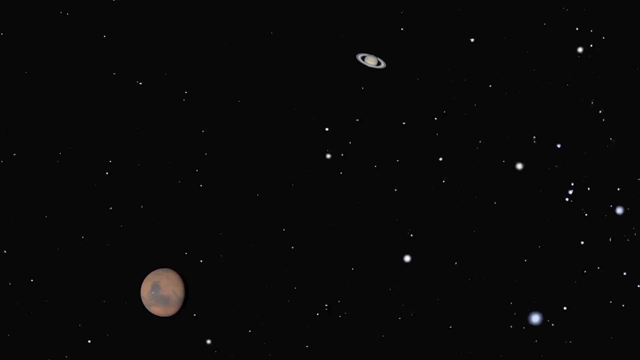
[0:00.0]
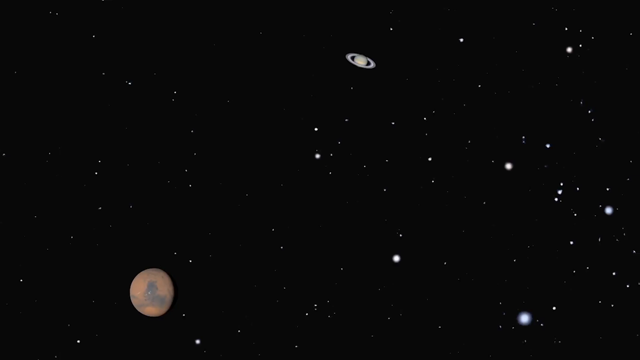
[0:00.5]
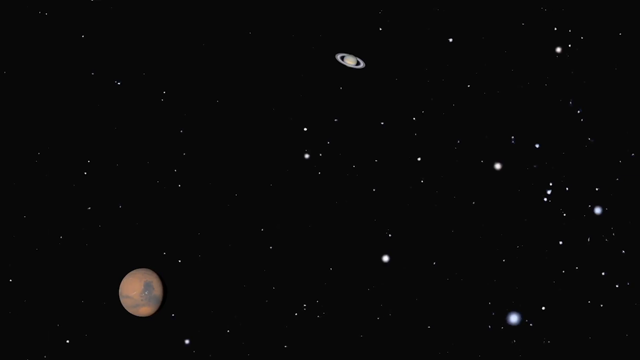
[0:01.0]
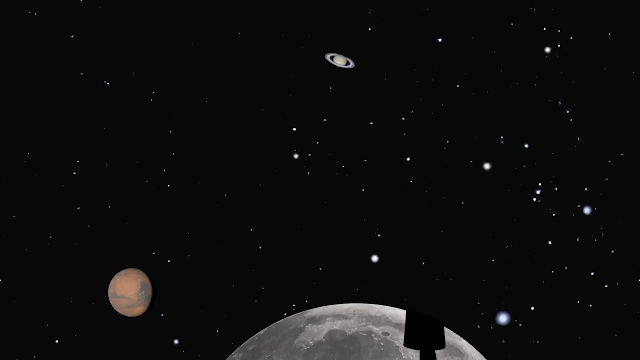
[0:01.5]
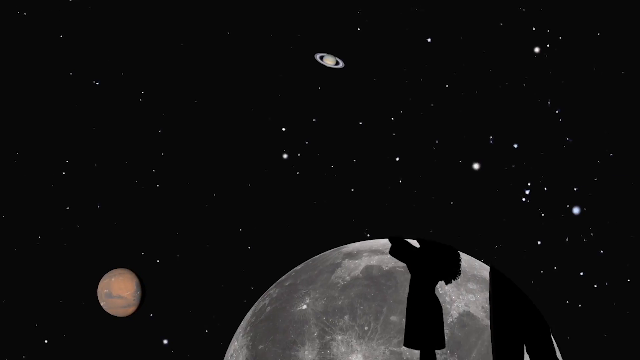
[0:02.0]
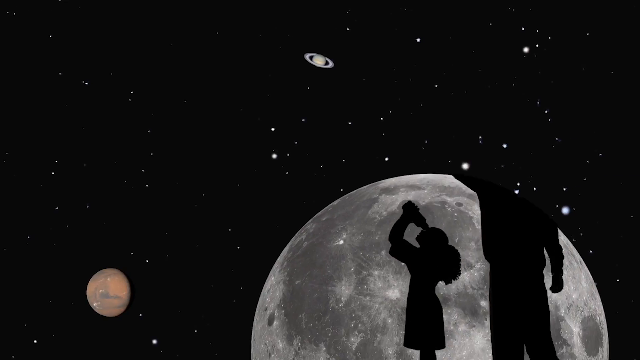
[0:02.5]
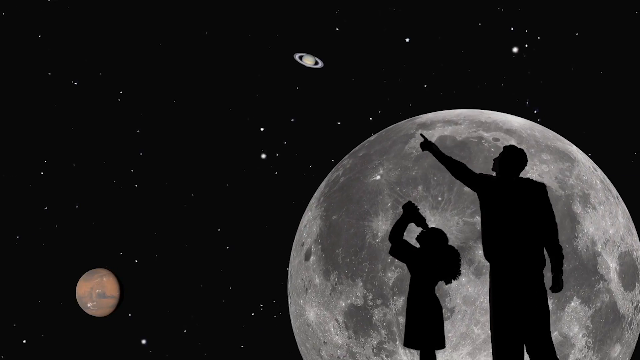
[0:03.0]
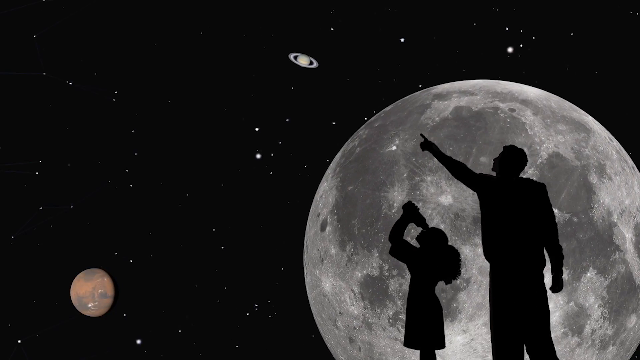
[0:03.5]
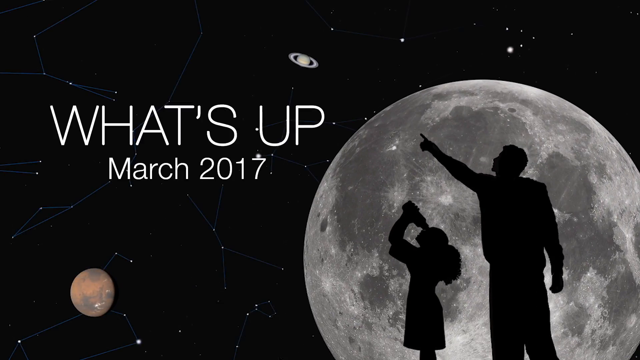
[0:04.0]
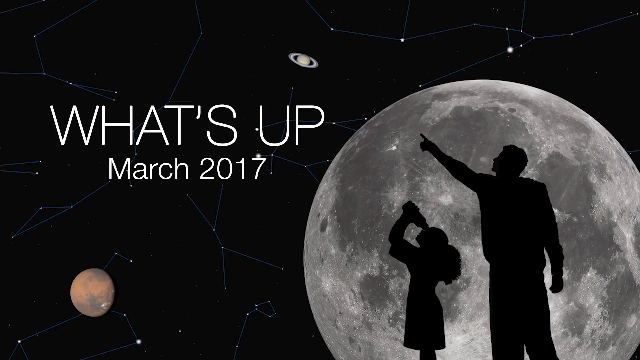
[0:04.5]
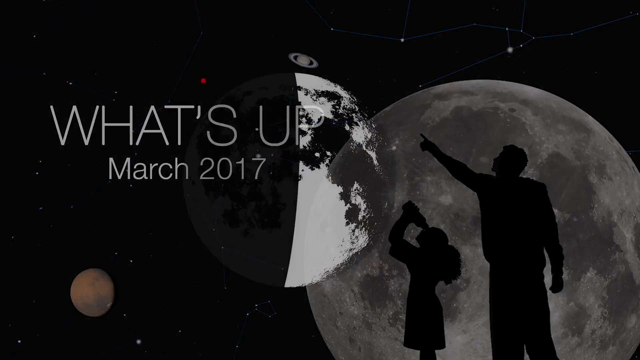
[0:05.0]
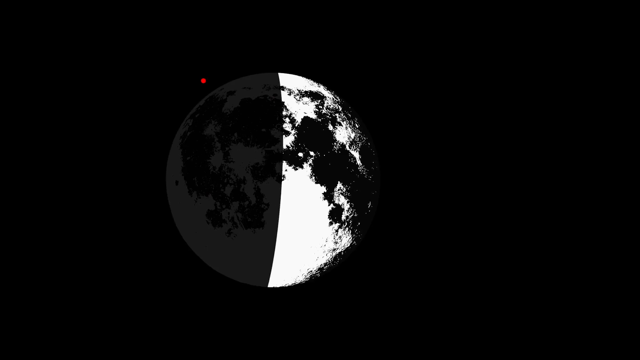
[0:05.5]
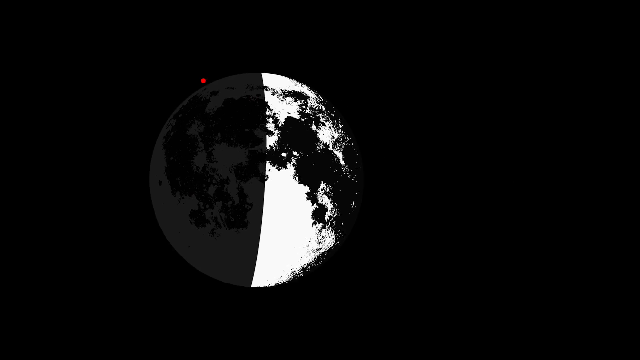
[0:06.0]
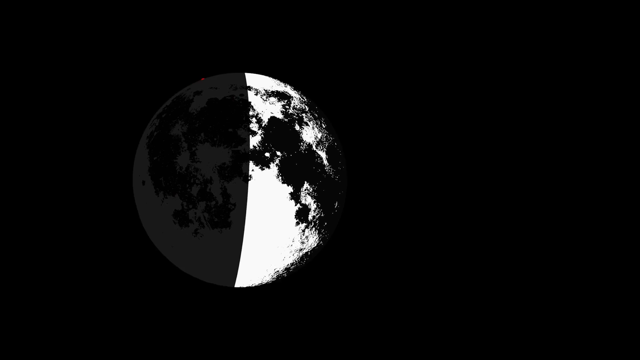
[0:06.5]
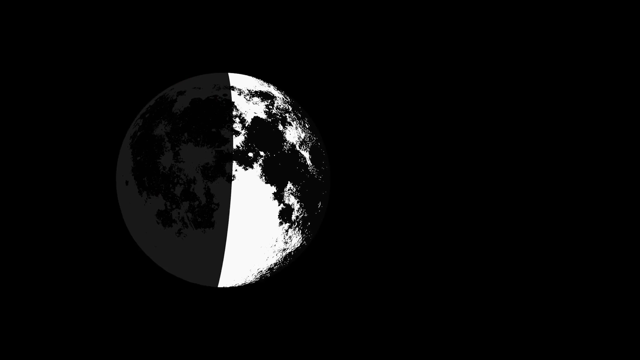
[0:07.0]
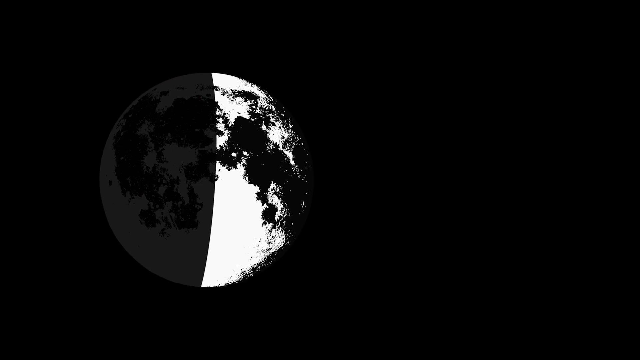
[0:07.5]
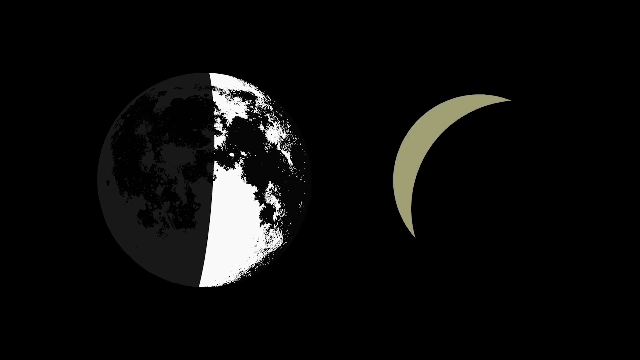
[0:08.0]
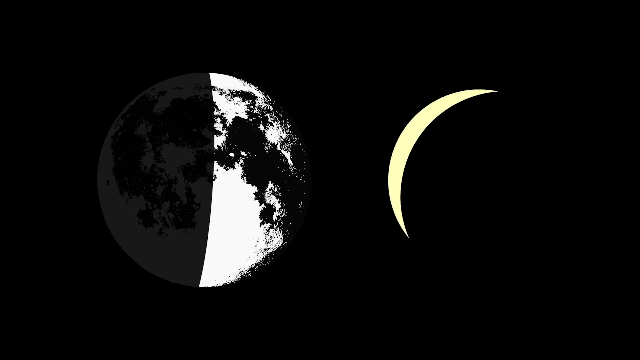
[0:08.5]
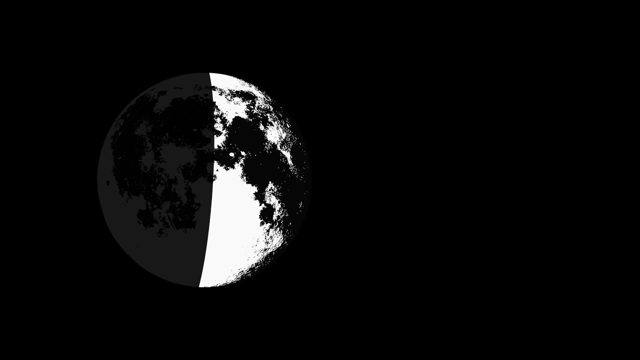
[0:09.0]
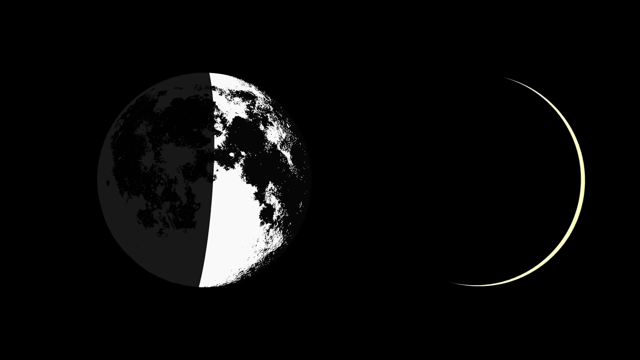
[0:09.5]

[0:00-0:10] Footage of space opens the video, showing different planets: apparently Mars at the bottom left and Saturn at the top right. Many white specks, stars of varying brightness and size, are scattered over the black background. Text appears on the left reading "what's up, March 2017". The moon then comes up at the bottom right, sort of popping up from the bottom left. Two people, almost like silhouettes, look up toward the top left of the sky.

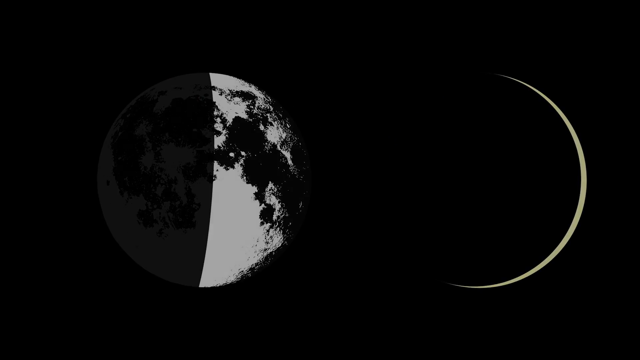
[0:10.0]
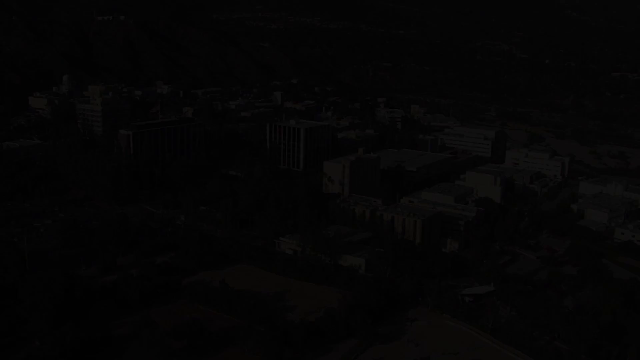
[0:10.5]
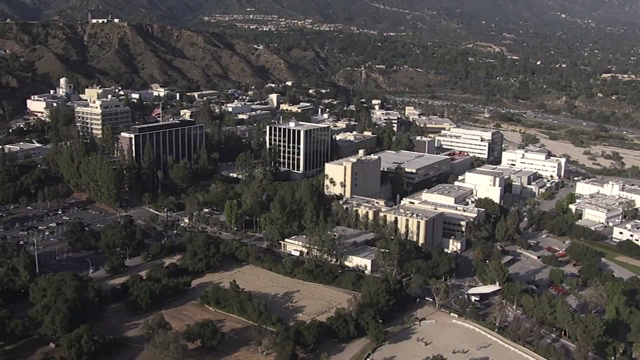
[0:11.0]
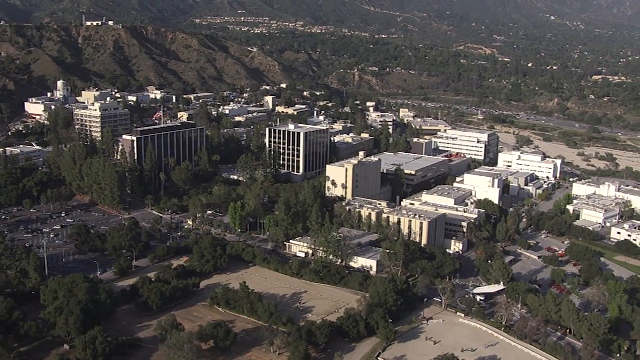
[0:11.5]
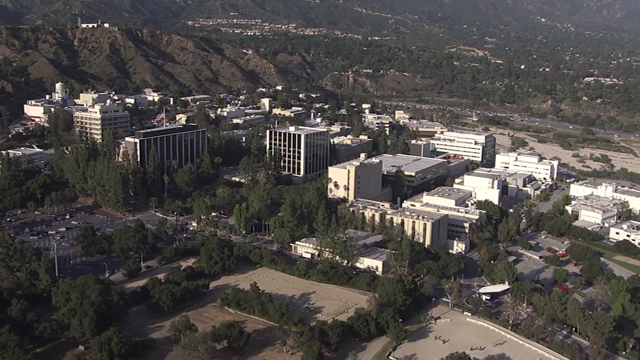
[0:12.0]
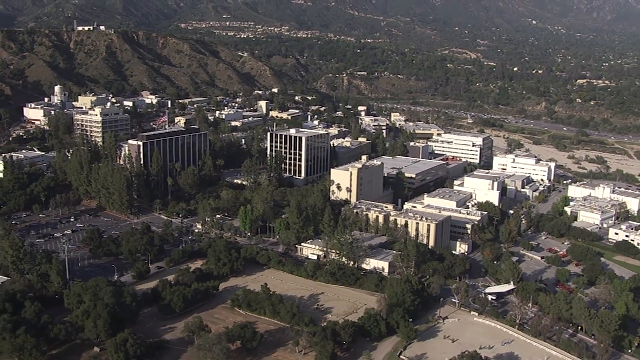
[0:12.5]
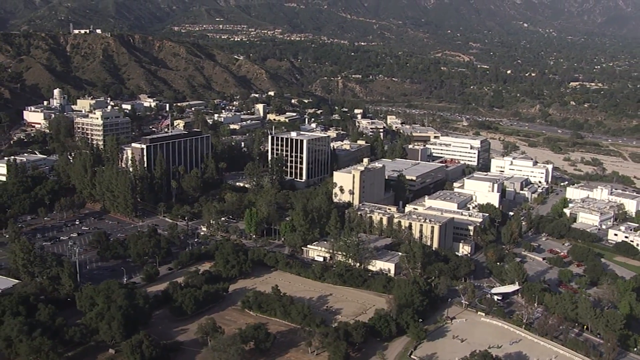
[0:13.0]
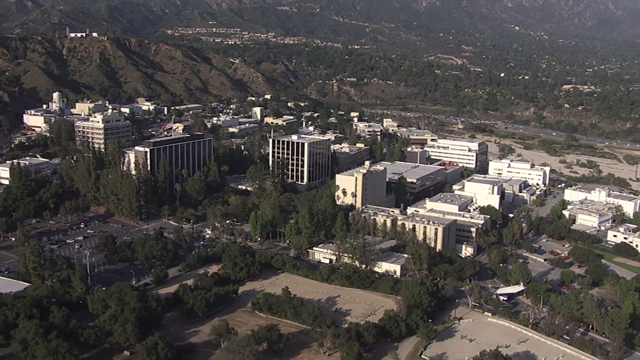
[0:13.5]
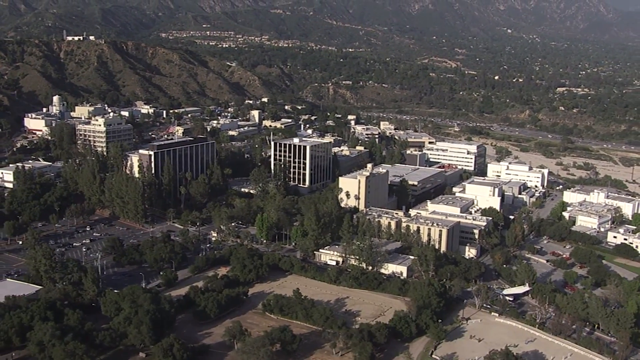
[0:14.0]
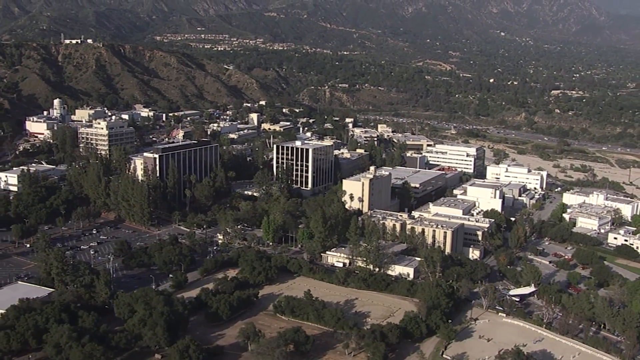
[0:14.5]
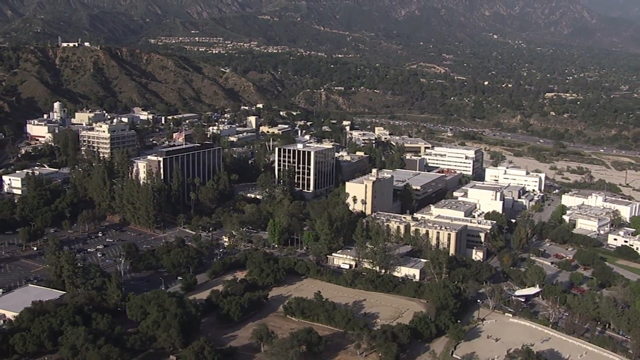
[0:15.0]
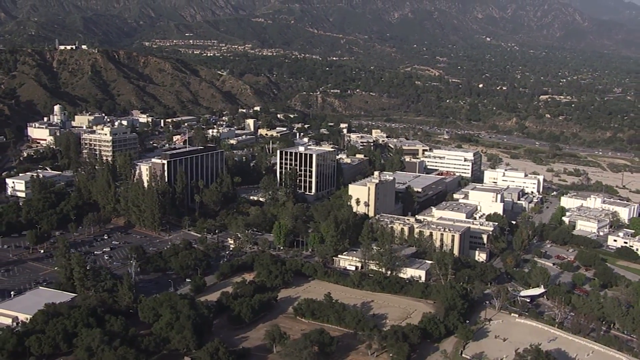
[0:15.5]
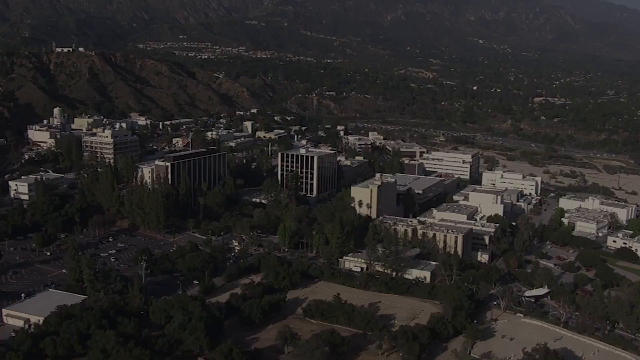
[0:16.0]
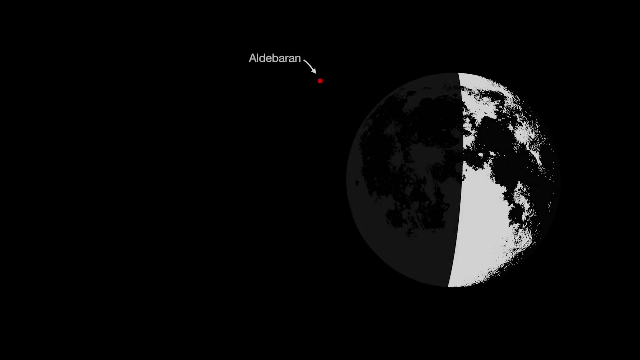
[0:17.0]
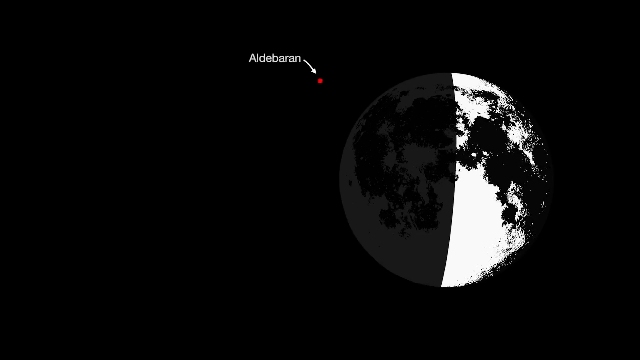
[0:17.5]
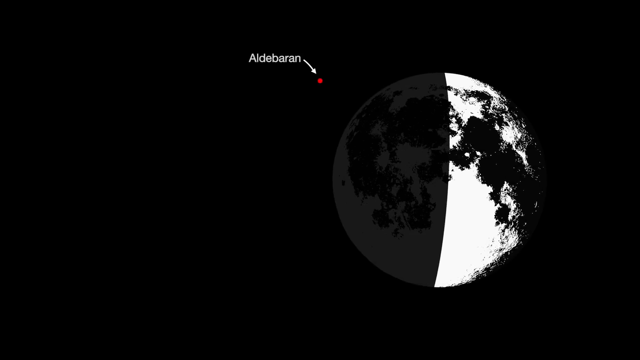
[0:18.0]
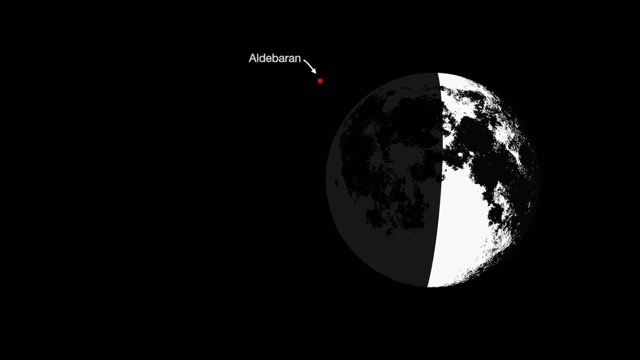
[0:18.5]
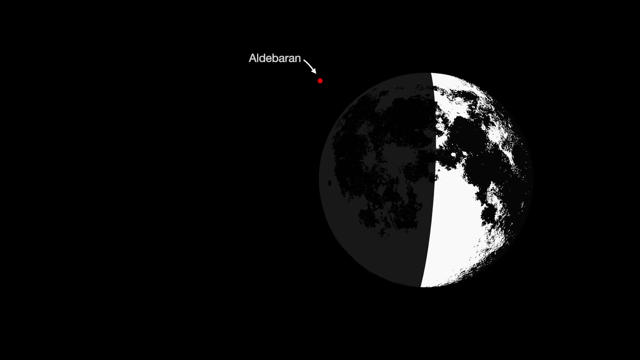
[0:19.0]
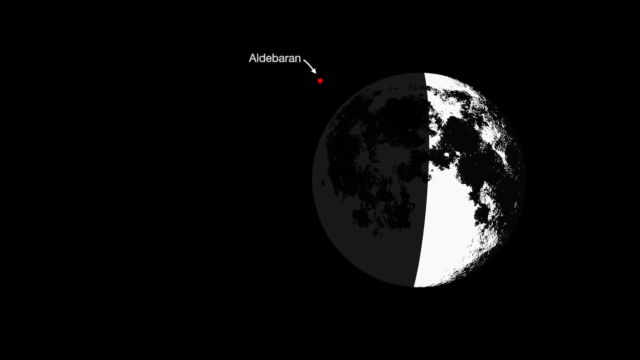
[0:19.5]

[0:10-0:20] Something like an eclipse appears, with the moon apparently covering much of the sun and leaving a very small crescent on the right side. The video cuts to an aerial view of a city, like a view from a helicopter, showing larger buildings, trees and the surrounding area. It then cuts to another image of space showing a small red dot with a white arrow pointing toward it; the red dot is apparently Aldebaran. To the right of the red dot is the right half of a half moon.